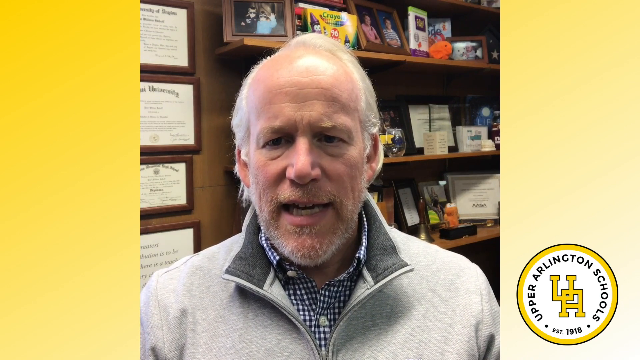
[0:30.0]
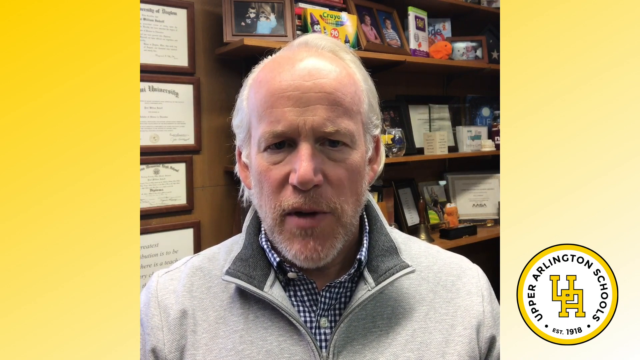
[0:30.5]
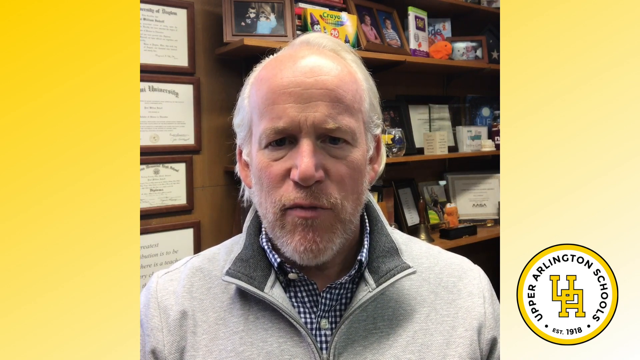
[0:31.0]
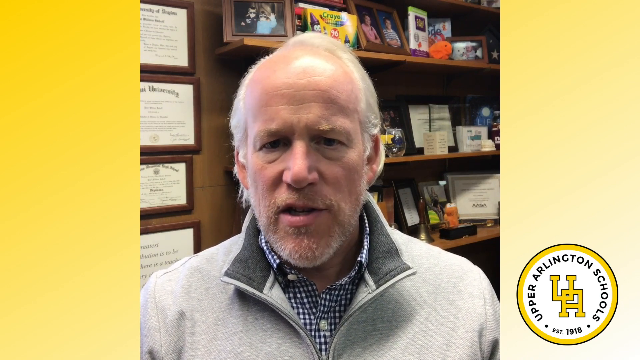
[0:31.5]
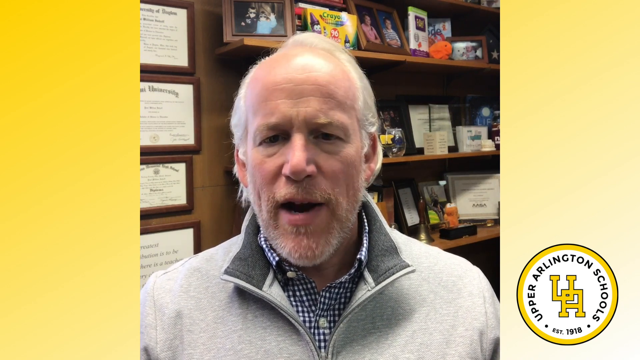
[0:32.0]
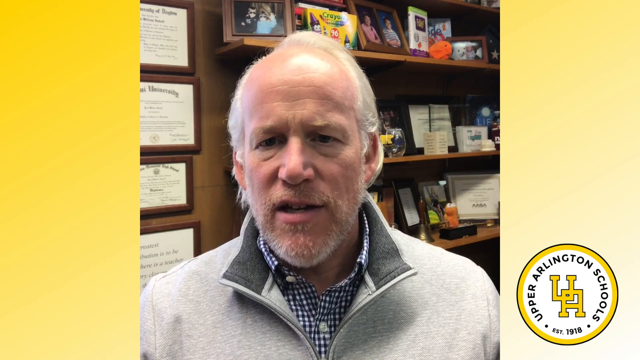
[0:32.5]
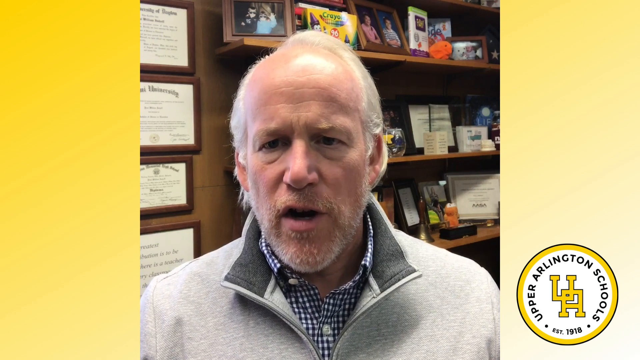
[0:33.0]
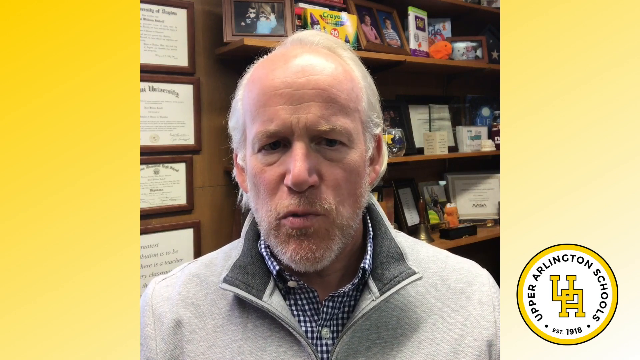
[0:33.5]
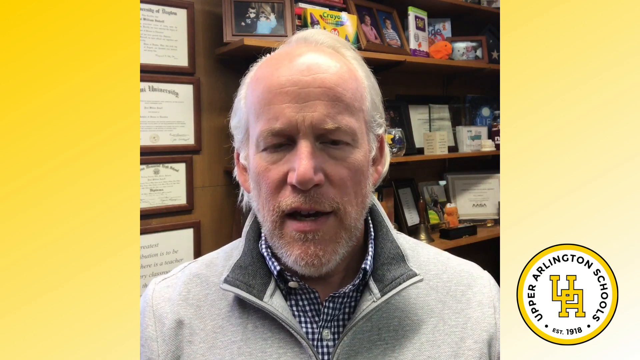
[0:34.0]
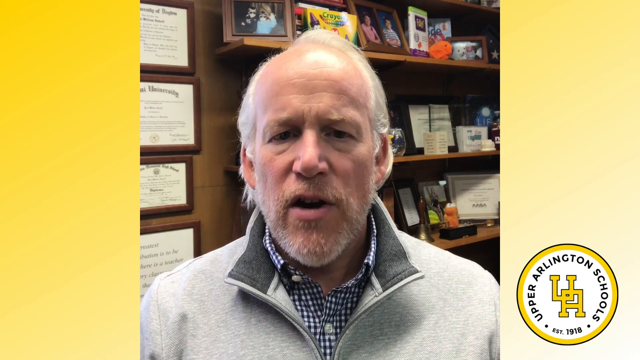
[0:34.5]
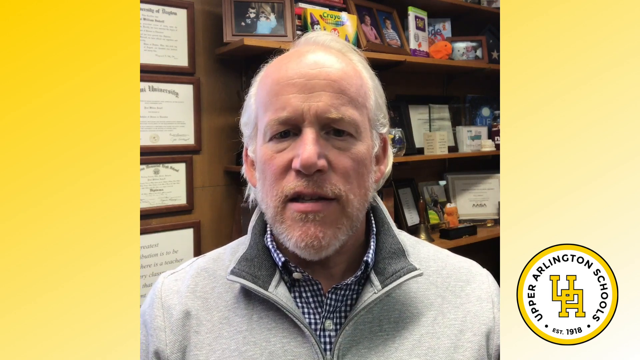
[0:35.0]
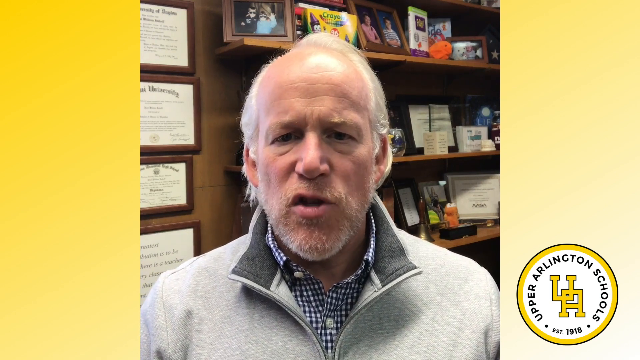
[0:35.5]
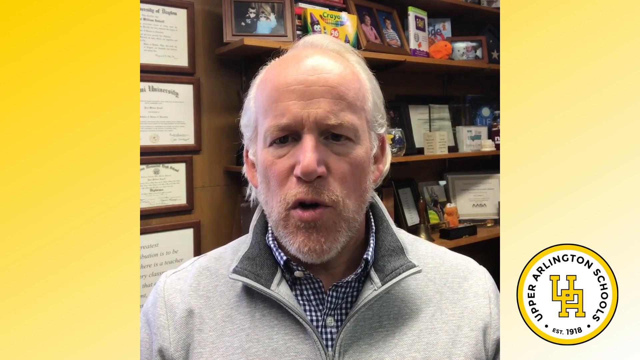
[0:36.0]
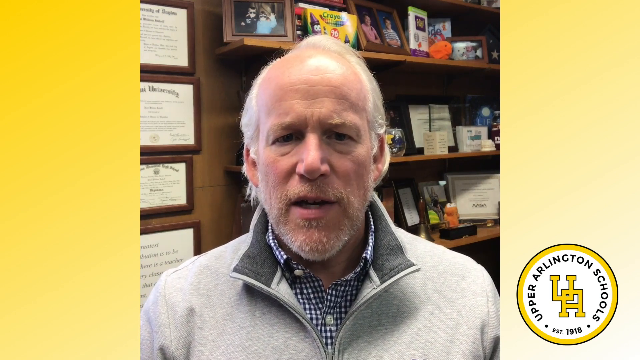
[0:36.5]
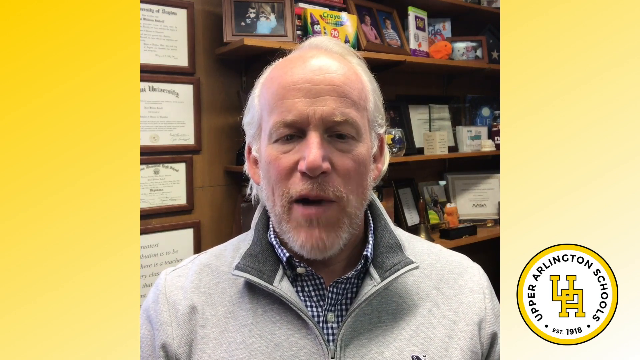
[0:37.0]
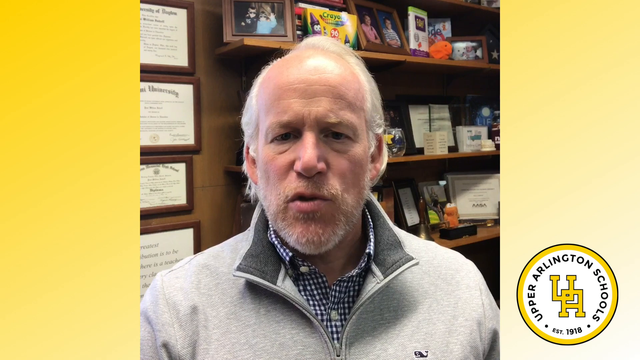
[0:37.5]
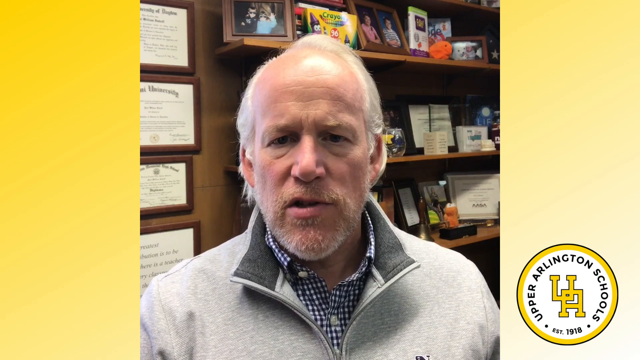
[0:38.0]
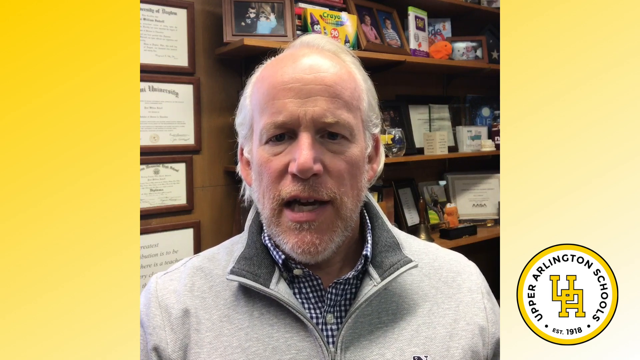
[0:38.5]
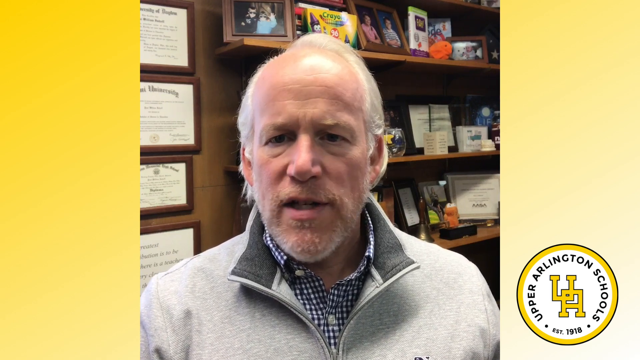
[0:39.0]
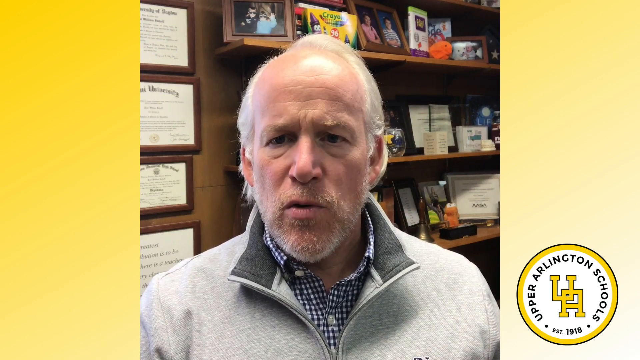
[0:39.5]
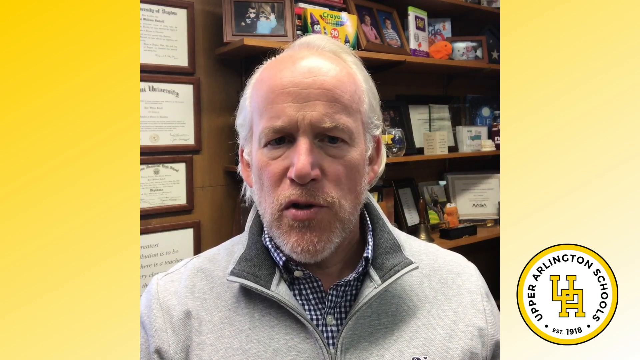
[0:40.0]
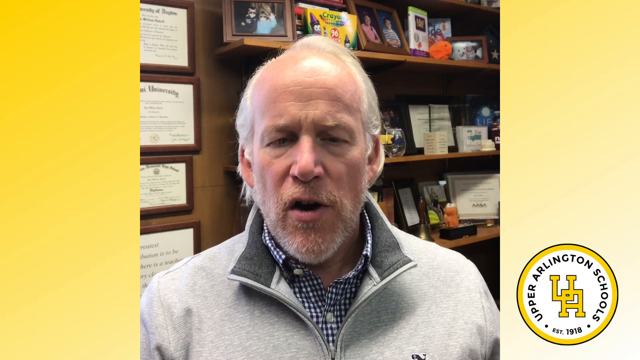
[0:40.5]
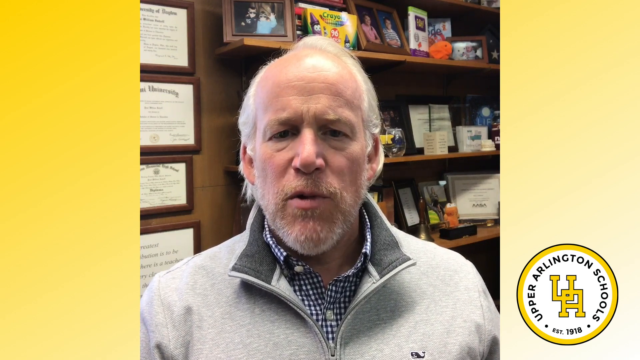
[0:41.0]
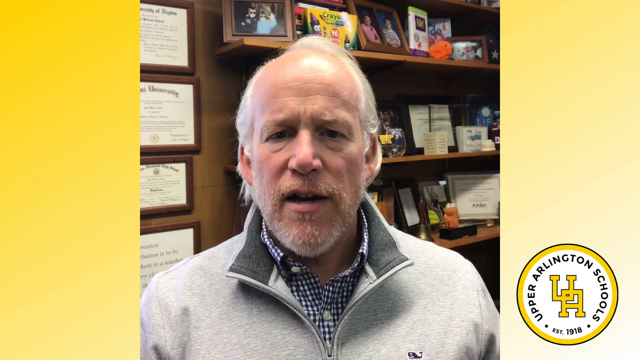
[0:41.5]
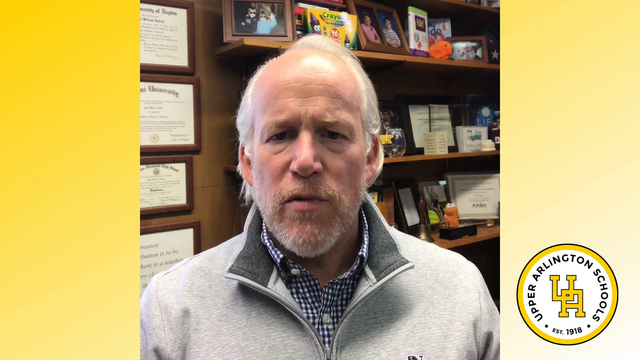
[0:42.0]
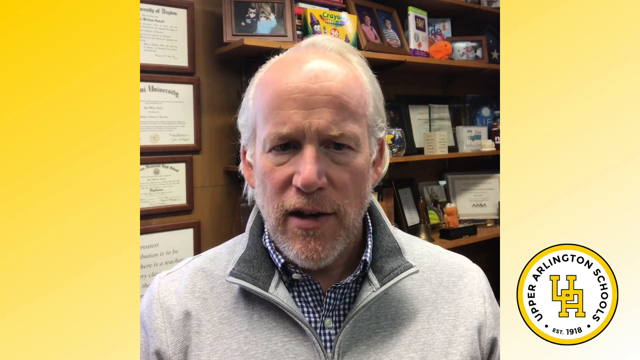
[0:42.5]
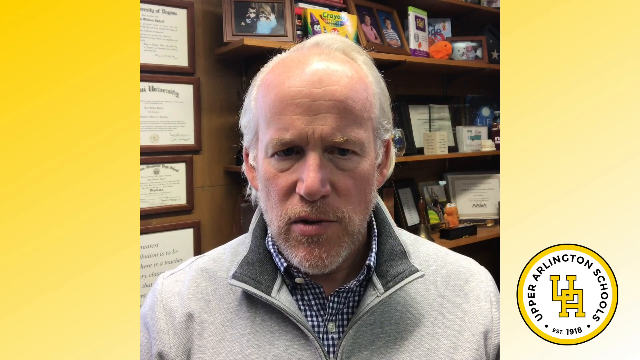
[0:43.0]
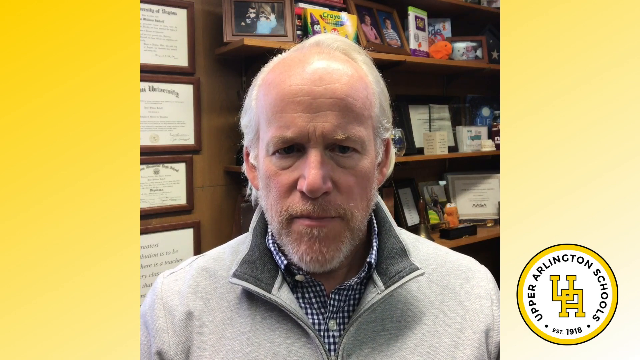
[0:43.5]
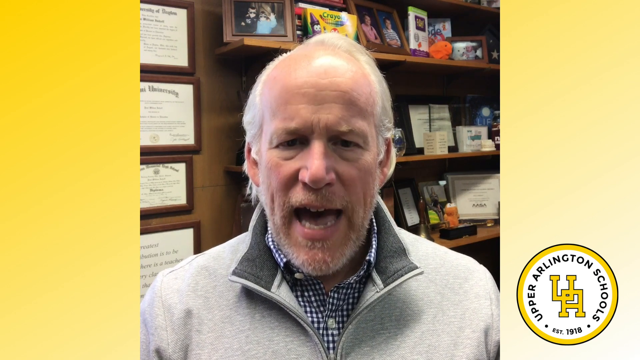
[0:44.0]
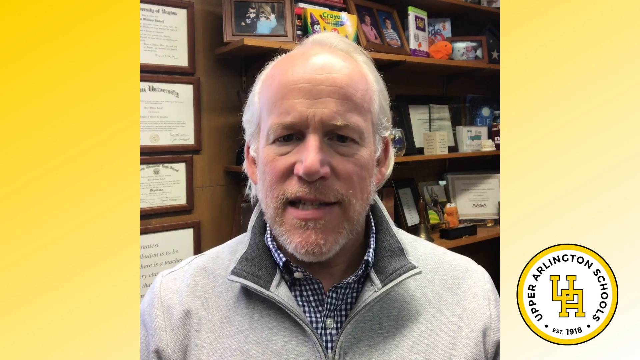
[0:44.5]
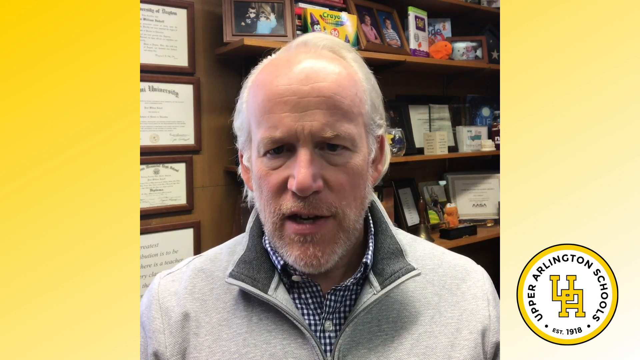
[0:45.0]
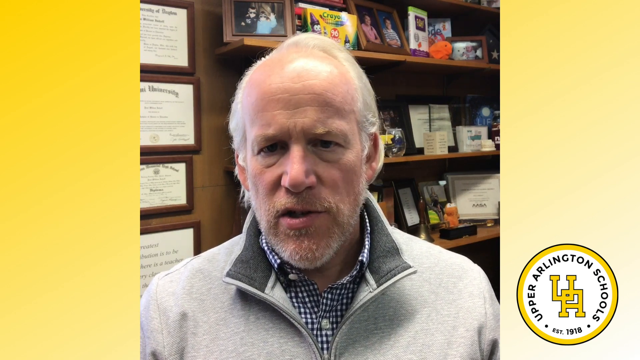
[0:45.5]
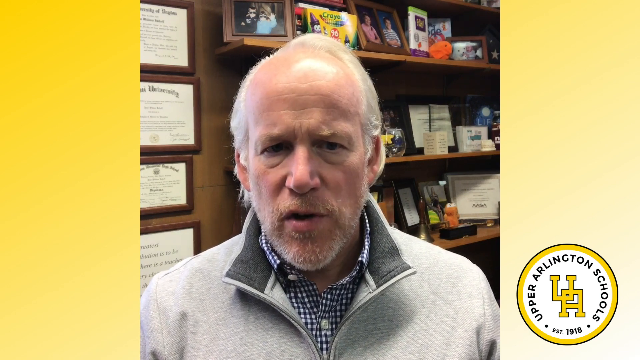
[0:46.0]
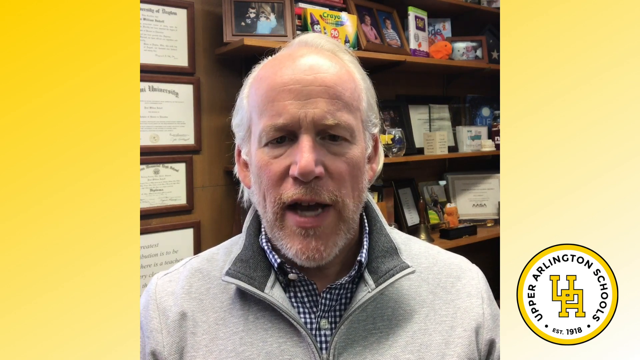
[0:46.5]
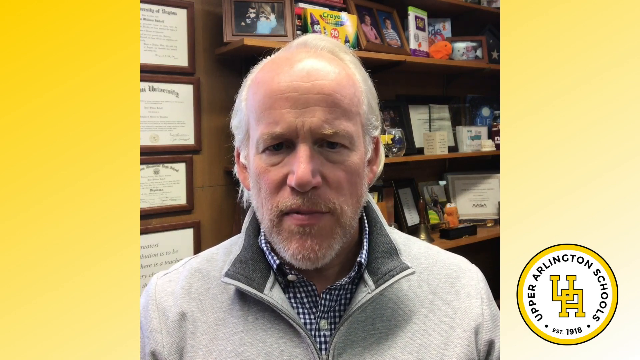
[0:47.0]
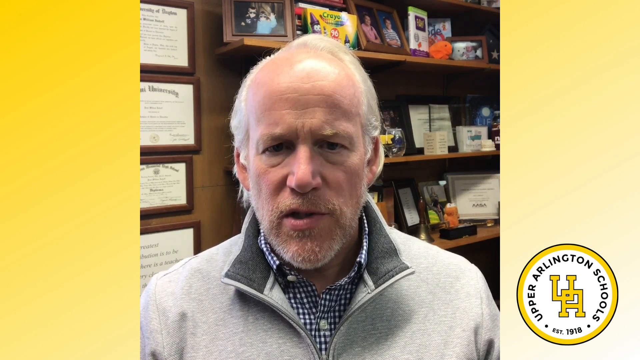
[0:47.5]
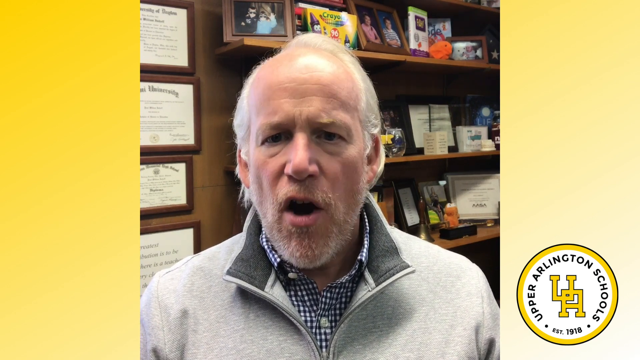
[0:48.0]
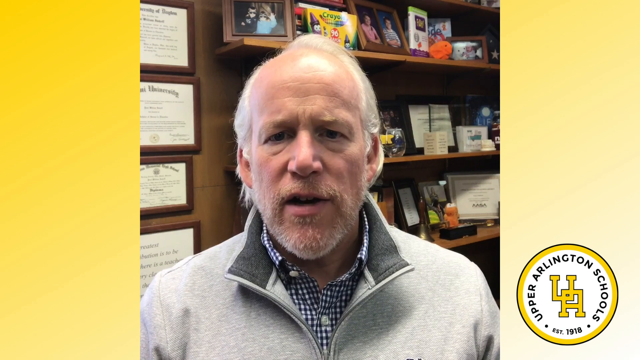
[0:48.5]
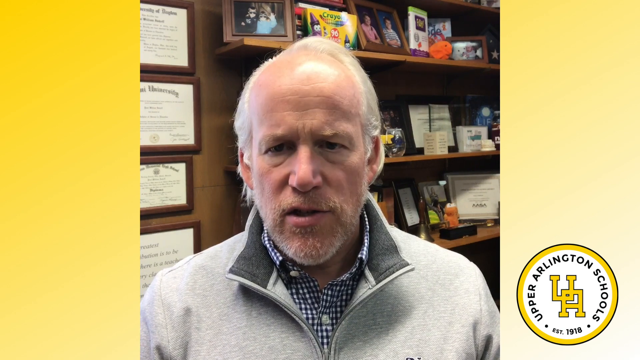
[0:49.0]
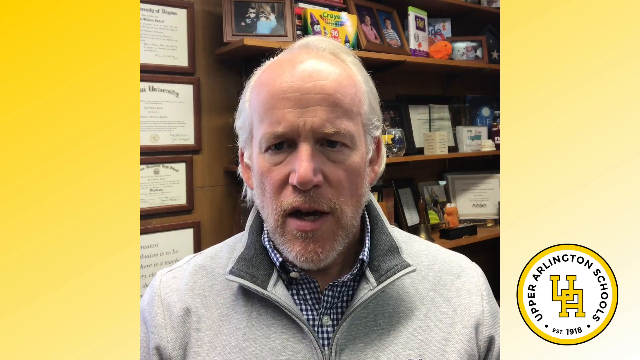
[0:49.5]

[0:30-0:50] The older man appears against a yellow and white gradient background. In the corner of the video is the Upper Arlington Schools emblem, a yellow circle with a bold outline and a thicker yellow circle line inside it, reading "Upper Arlington Schools EST 1918" with a yellow U and a yellow A. The man keeps talking. Behind him is a shelf full of pictures and possibly awards, and on the left of the shelf are what appear to be his educational diplomas and awards. He wears a gray jersey with a checkered shirt. There are no captions or subtitles on screen.